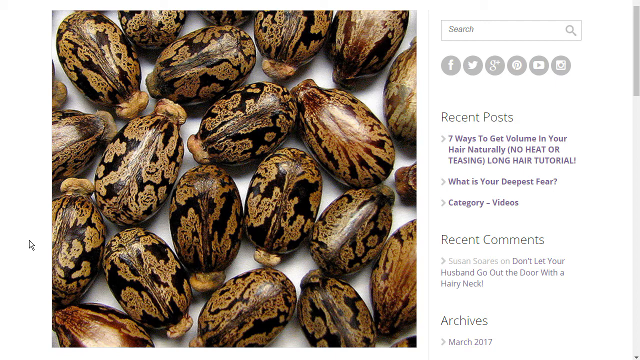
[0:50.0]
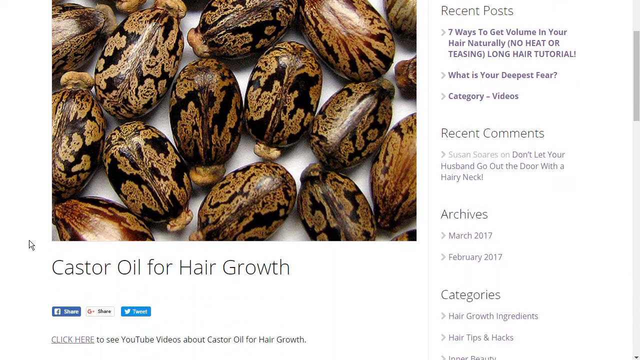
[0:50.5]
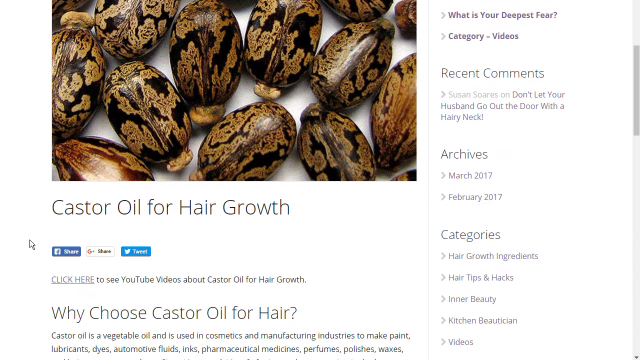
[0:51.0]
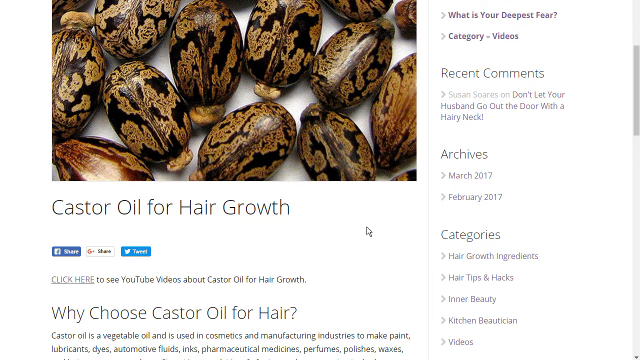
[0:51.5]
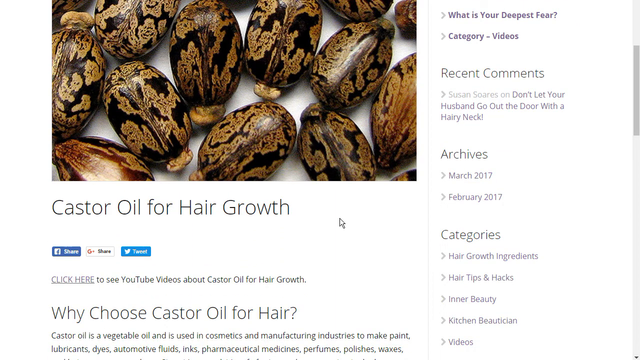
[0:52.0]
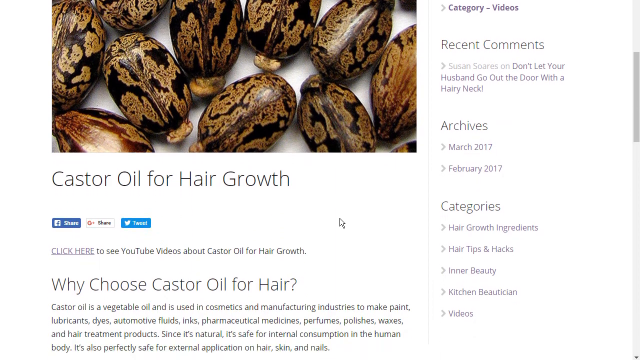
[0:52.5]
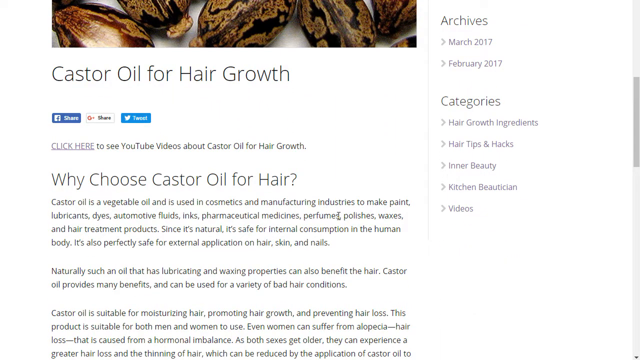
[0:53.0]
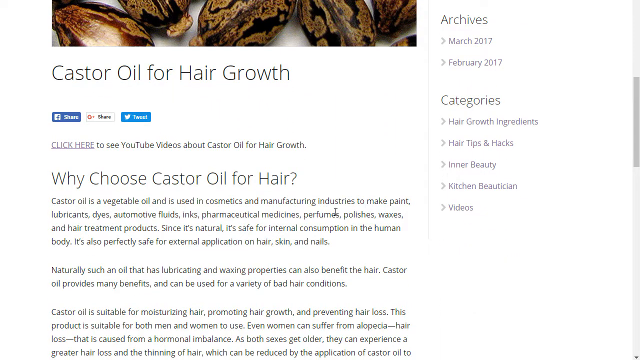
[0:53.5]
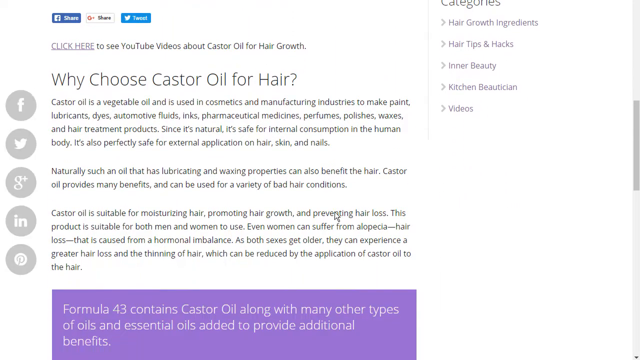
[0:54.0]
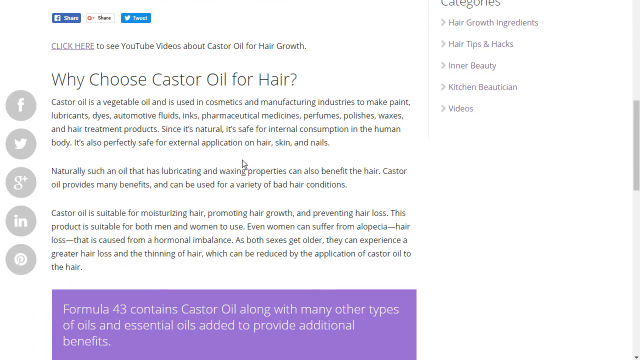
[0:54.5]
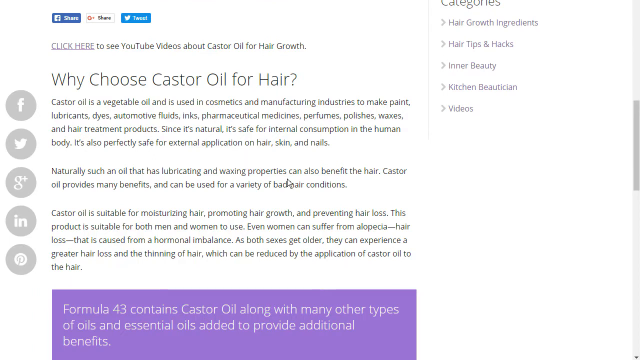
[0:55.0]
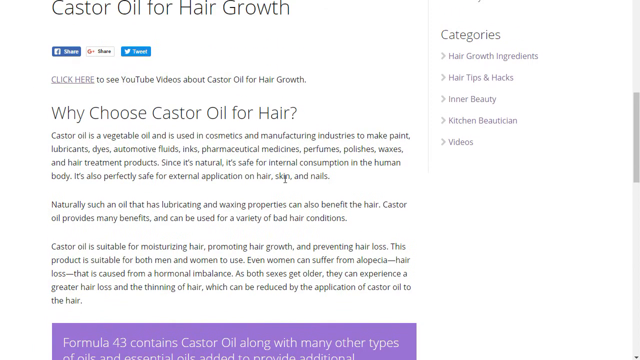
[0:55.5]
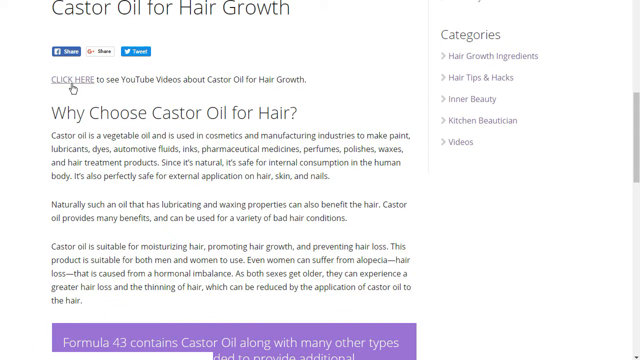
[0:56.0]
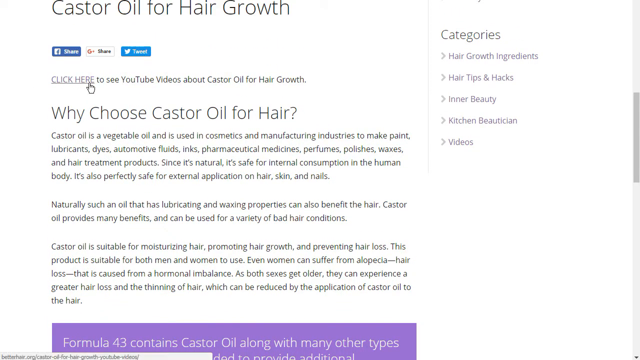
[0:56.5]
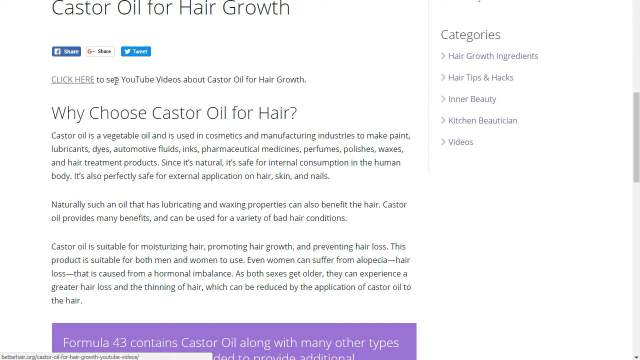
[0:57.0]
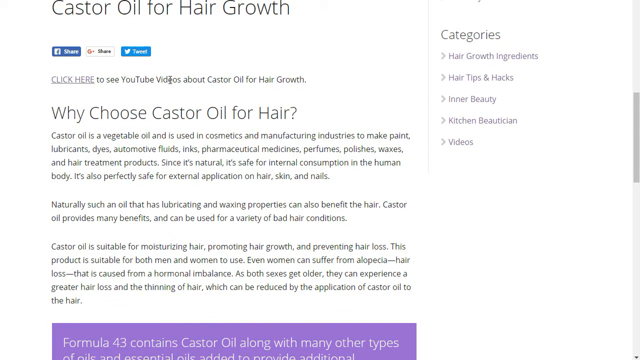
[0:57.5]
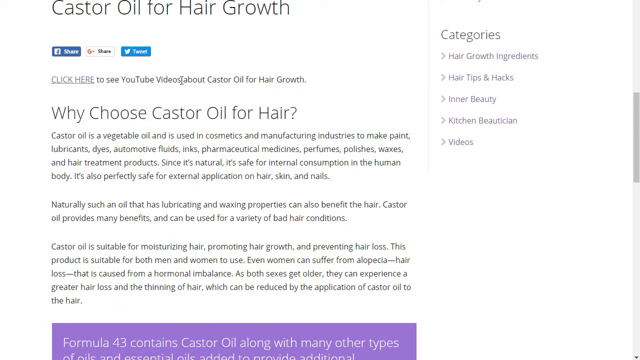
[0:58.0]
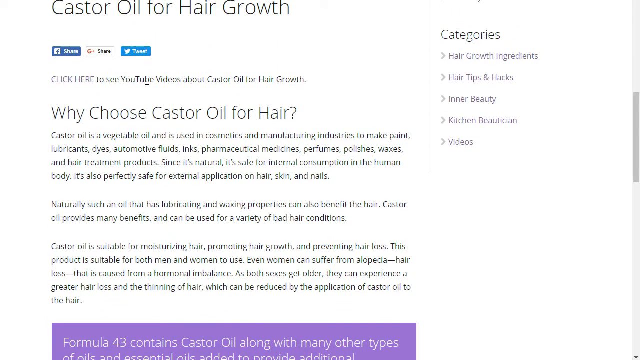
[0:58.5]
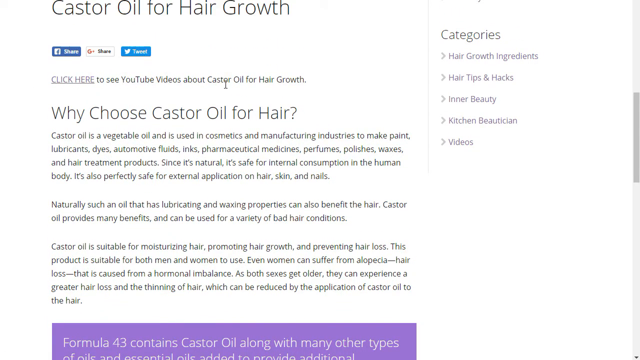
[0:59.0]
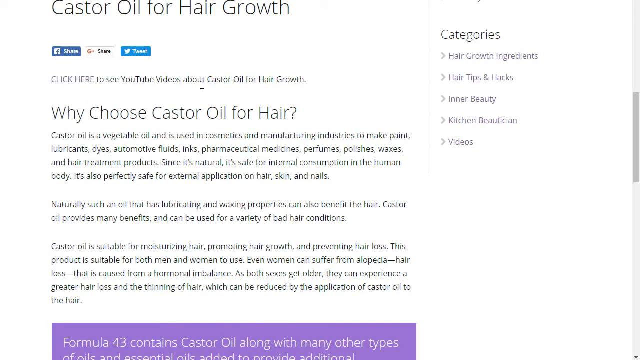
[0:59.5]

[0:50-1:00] The unidentified plant is still shown in the article about hair growth, and just below the picture of the plant are the words "castor oil for hair growth." At the very bottom are the words "why choose castor oil for hair growth." The cursor continues to scroll down the article, and a snippet reads "castor oil is a vegetable oil and is used in cosmetics and manufacturing industries to make paint, lubricants, dye, automotive fluids, inks, pharmaceuticals, medicines, perfumes, polishes, waxes, and hair treatment products."